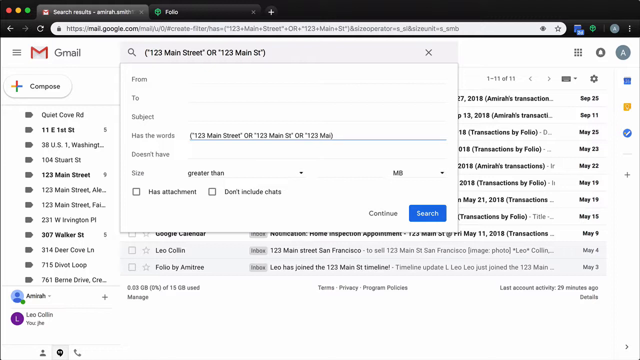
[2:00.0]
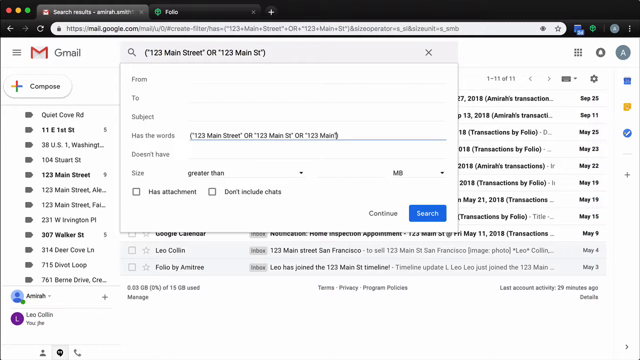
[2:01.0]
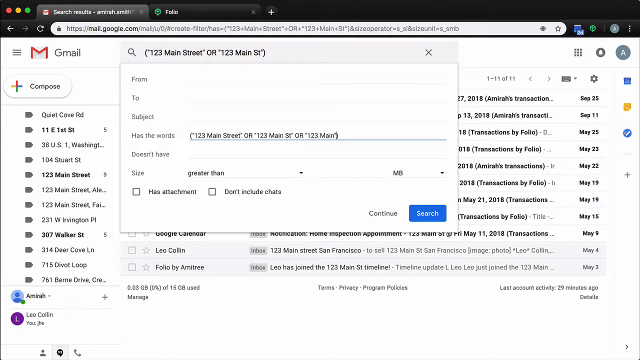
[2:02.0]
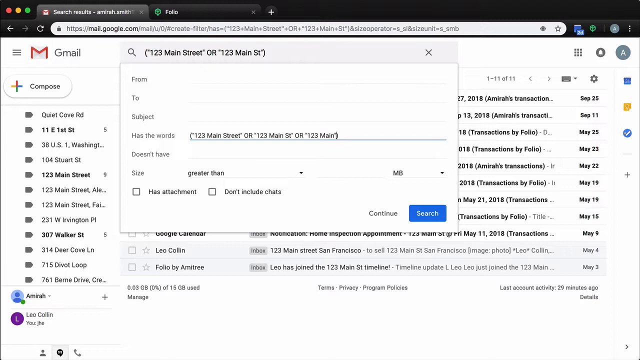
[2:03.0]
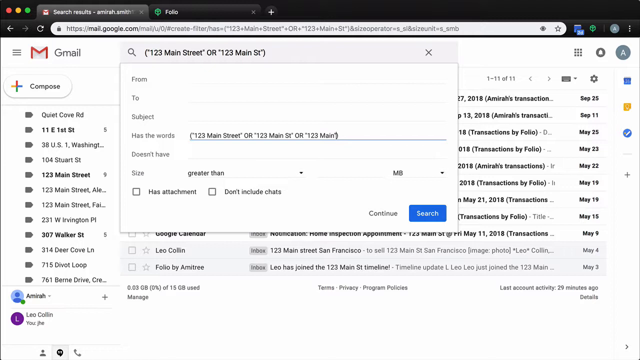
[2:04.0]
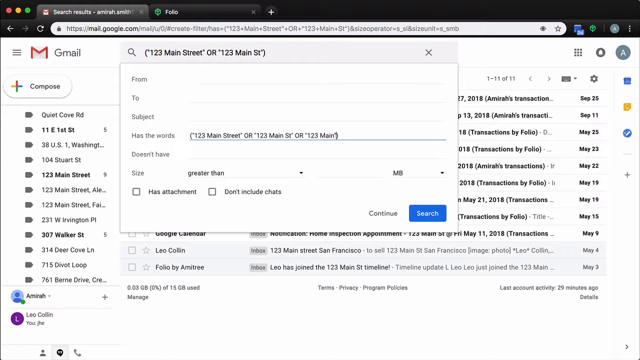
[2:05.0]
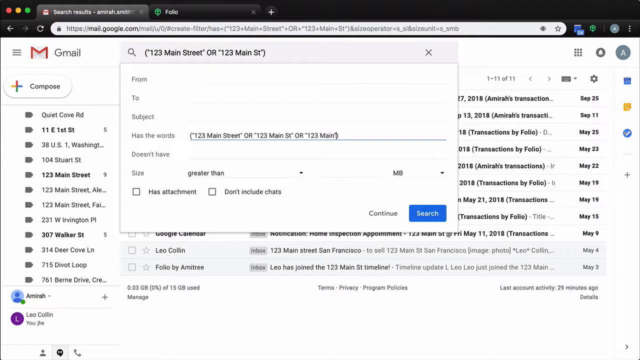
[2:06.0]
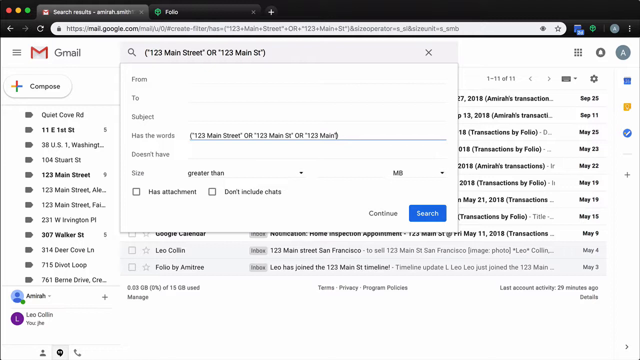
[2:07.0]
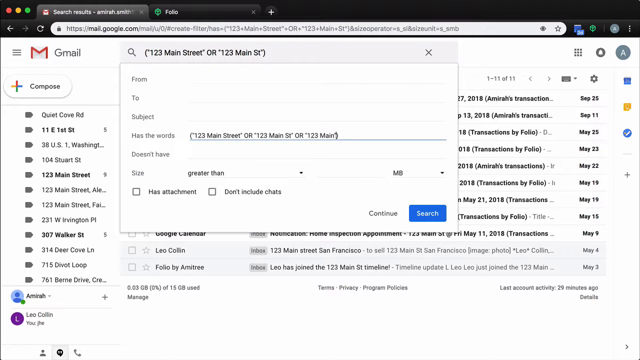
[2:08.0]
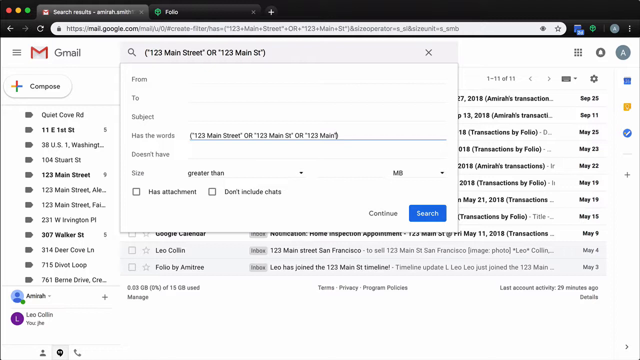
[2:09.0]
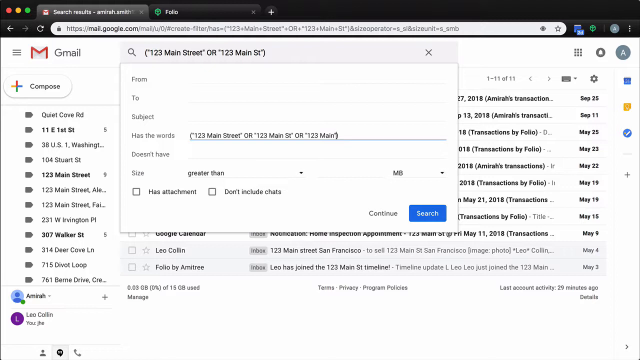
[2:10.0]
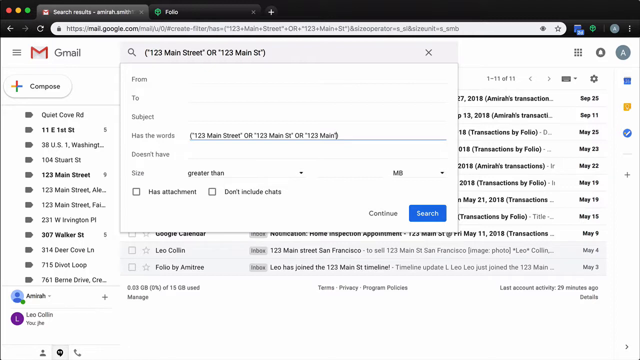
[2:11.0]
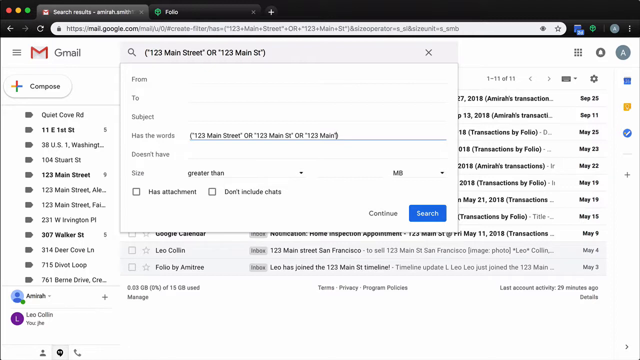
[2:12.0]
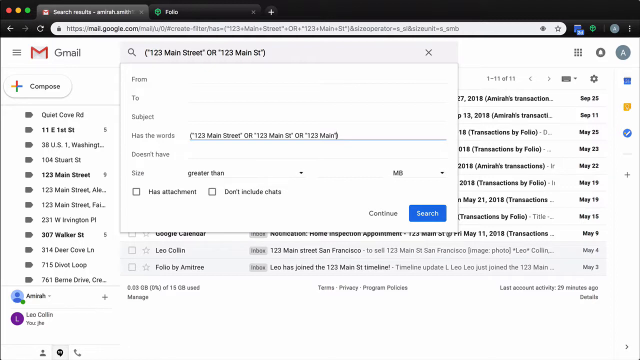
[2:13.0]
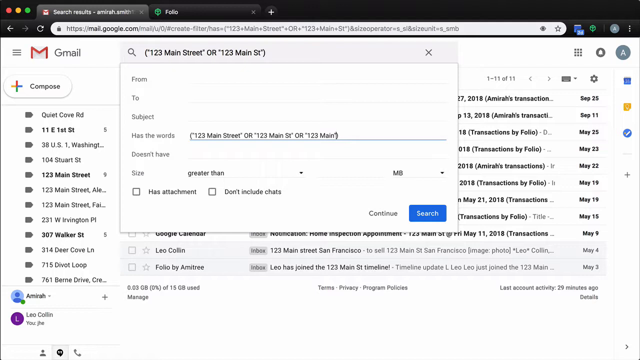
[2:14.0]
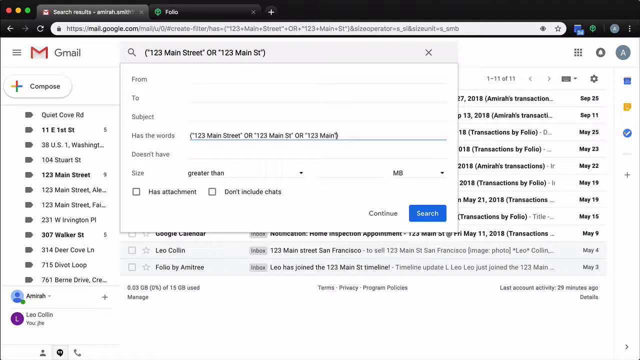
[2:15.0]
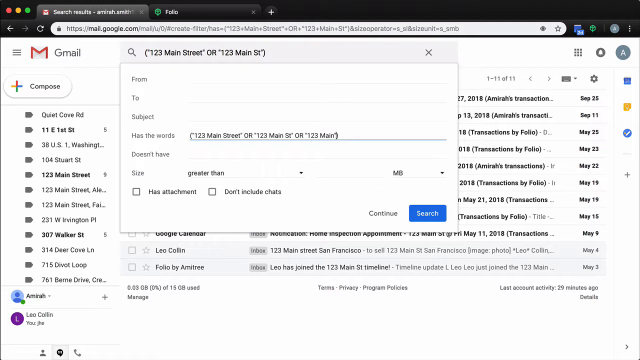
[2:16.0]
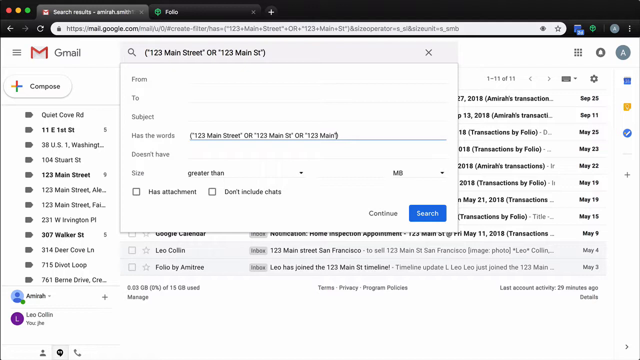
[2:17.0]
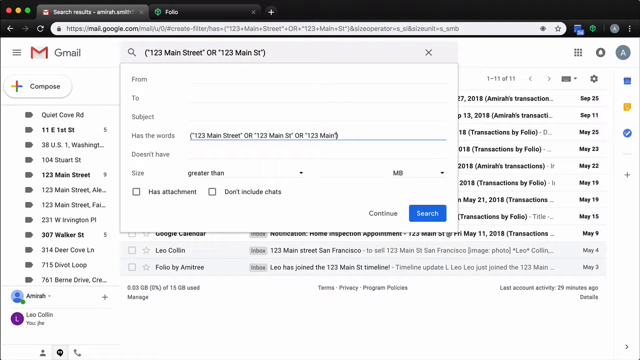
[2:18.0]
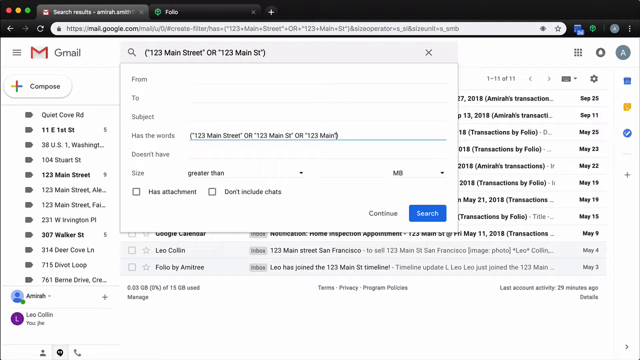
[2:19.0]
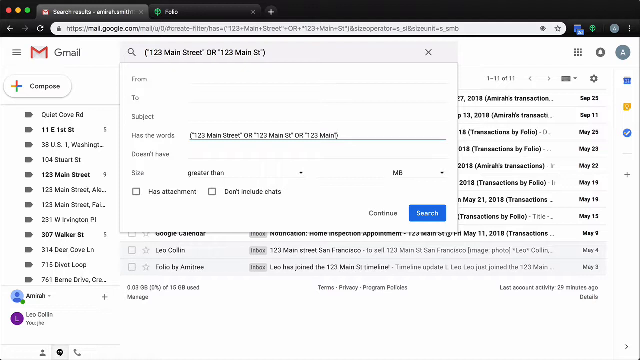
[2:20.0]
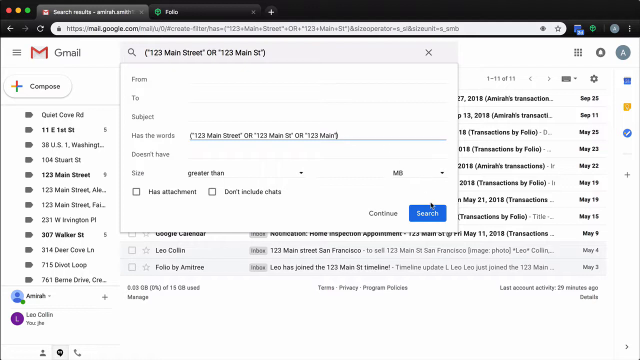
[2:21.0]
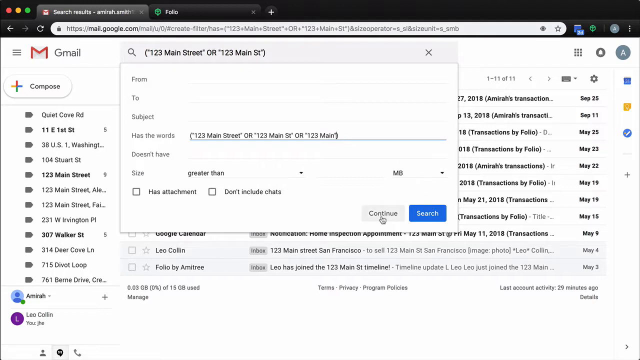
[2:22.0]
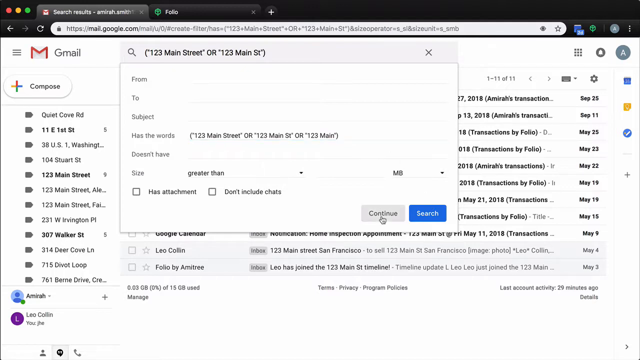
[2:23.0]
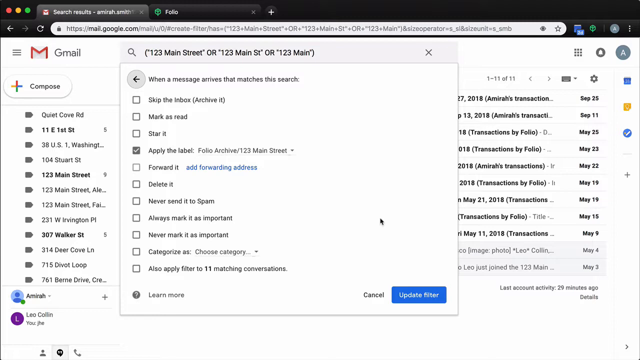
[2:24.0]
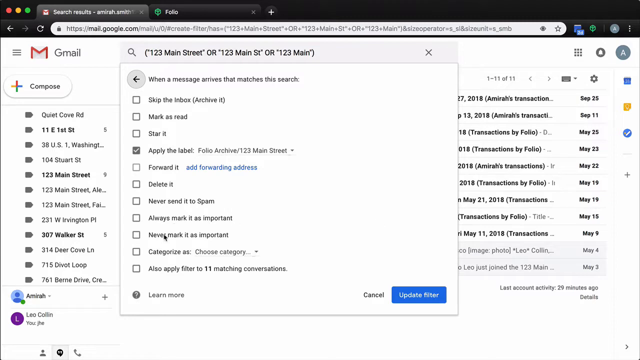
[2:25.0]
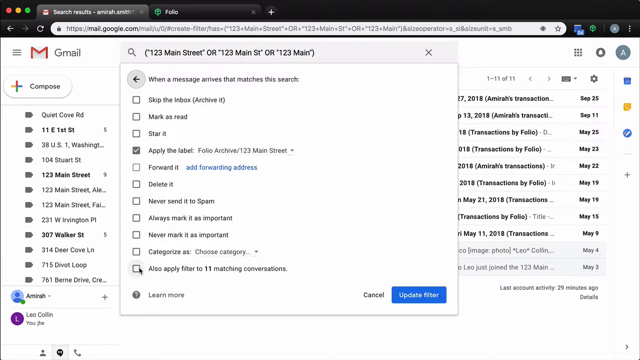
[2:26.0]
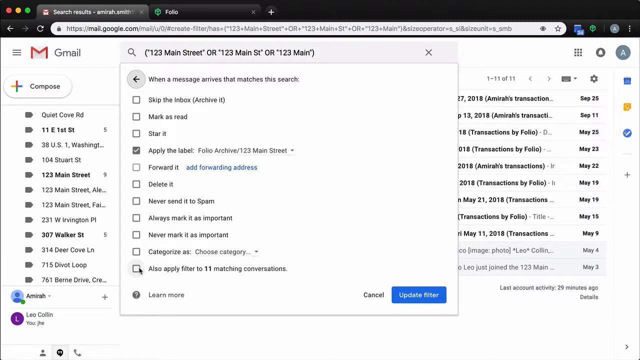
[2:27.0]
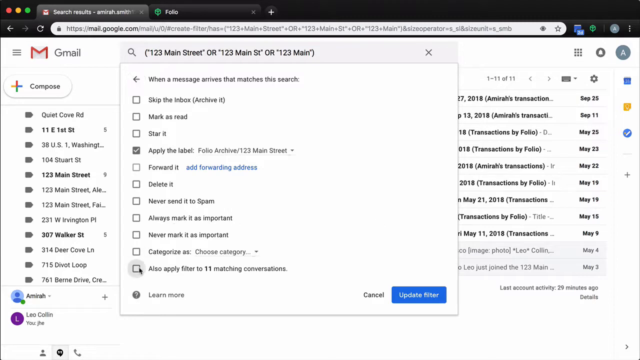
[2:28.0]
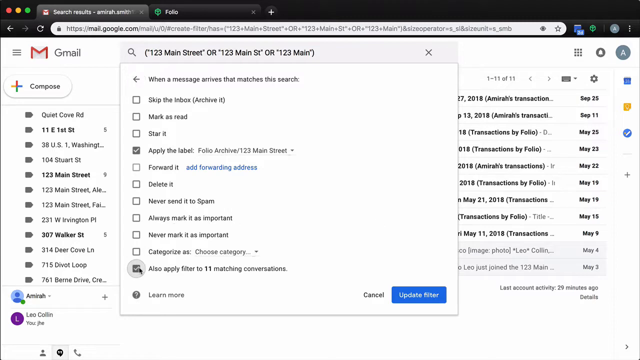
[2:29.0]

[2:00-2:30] The user edits the has the words option and types "123 main", so the keywords now read 123 main street or 123 main ST or 123 main. At the bottom are two buttons, including continue and search. The user clicks continue, and a different set of options appears with the text "when a message arrives that matches this search" above a list of checkboxes: skip the inbox (archive it), mark as read, star it, apply the label, which is checked with a label including 123 Main Street, and forward it, with a clickable link to add a forwarding address. The following checkboxes are delete it, never send it to spam, always mark it as important, never mark it as important, categorize as, and an option to also apply the filter to matching conversations, which the user also checks. At the bottom right are two buttons, cancel and update filter.